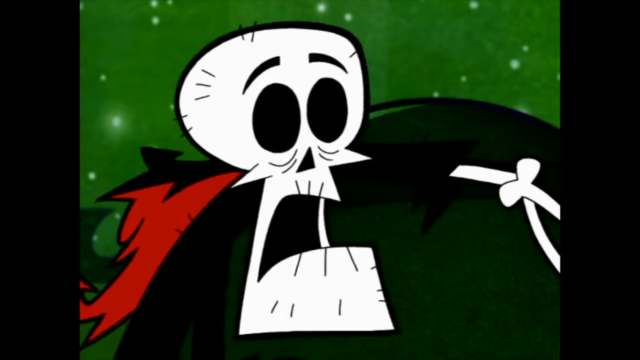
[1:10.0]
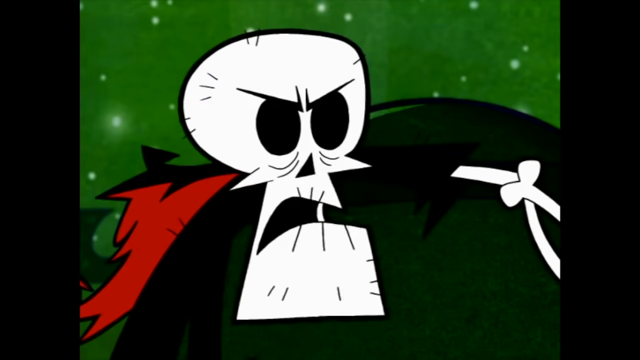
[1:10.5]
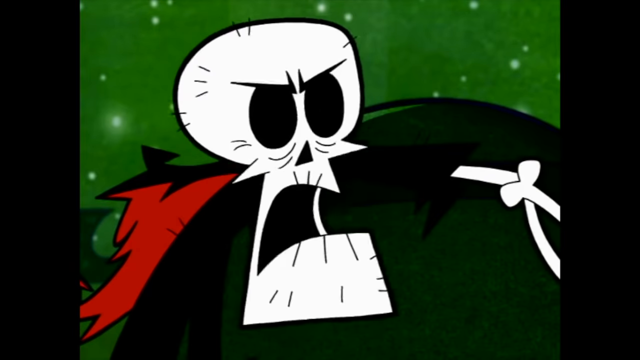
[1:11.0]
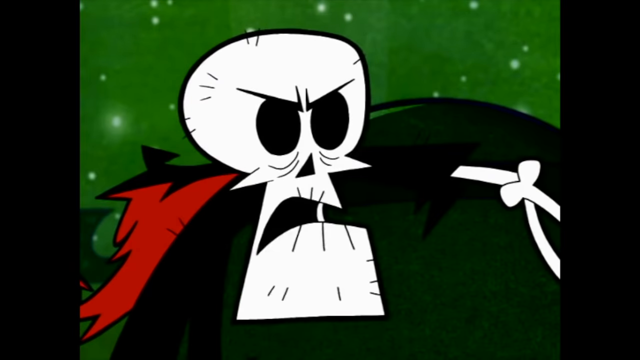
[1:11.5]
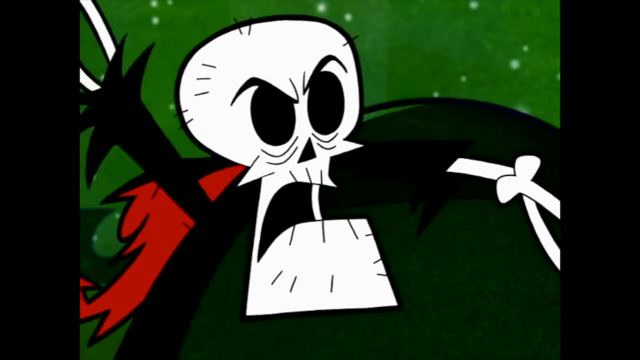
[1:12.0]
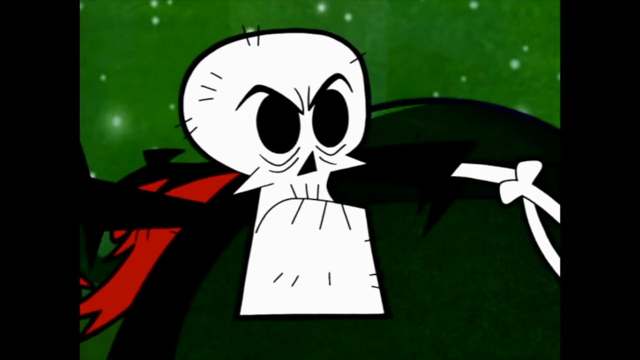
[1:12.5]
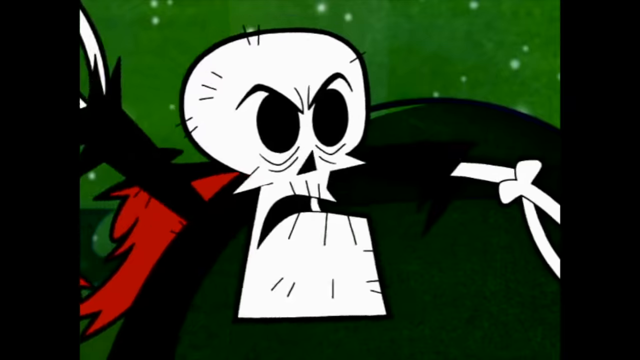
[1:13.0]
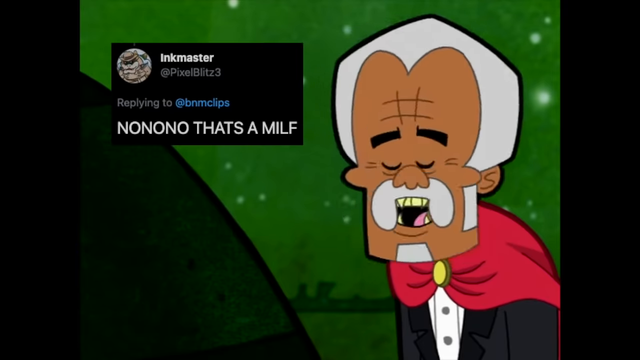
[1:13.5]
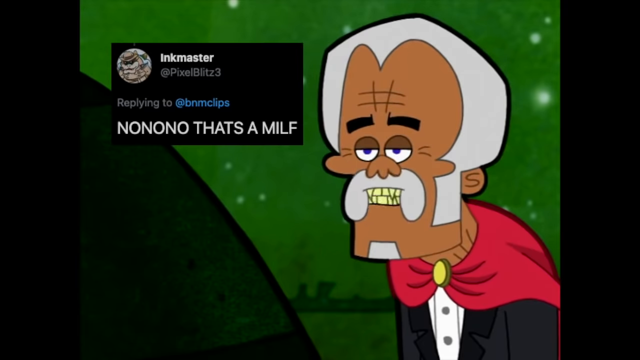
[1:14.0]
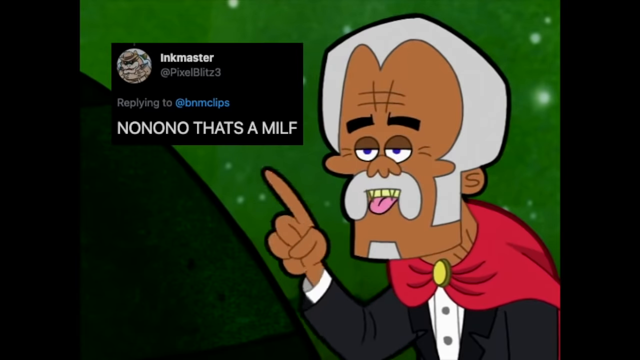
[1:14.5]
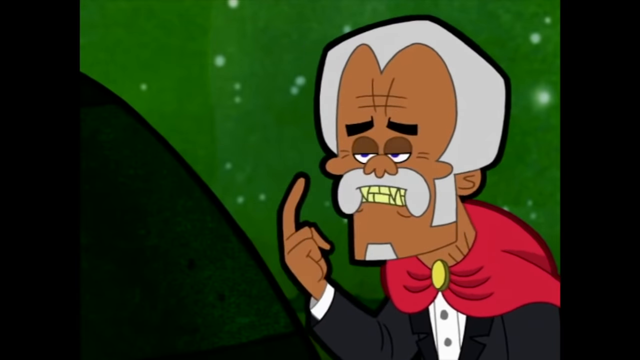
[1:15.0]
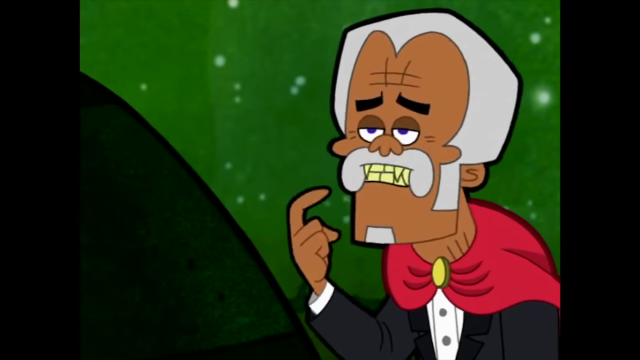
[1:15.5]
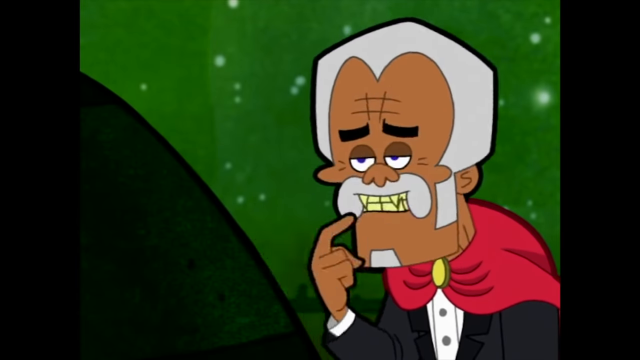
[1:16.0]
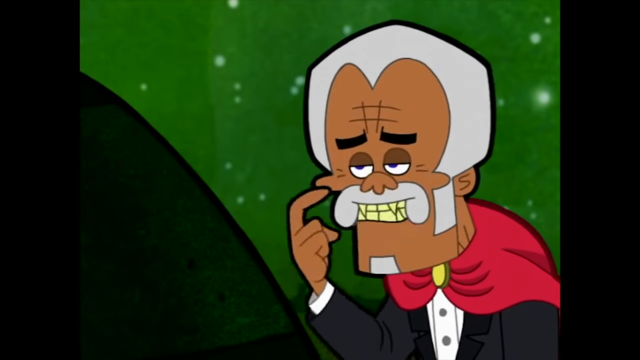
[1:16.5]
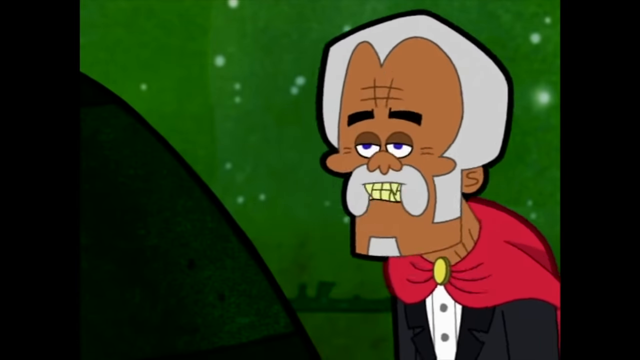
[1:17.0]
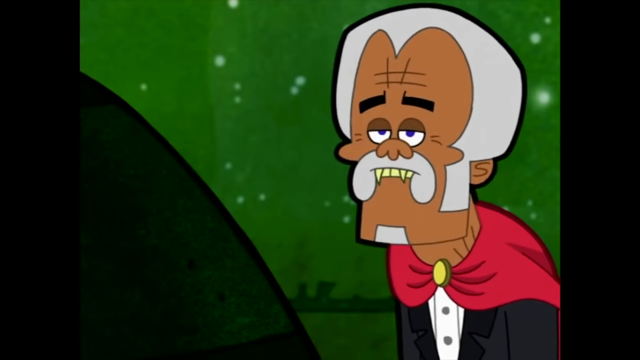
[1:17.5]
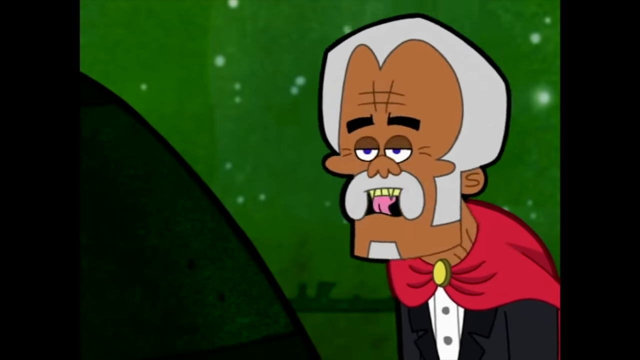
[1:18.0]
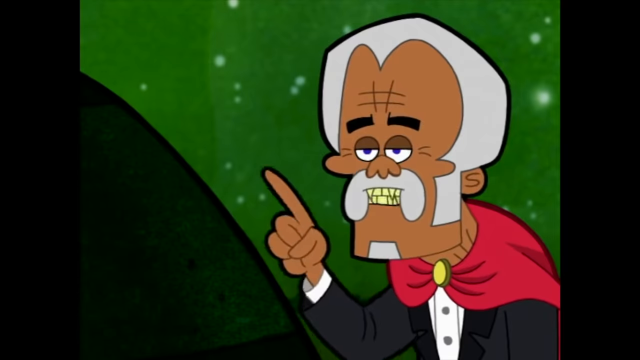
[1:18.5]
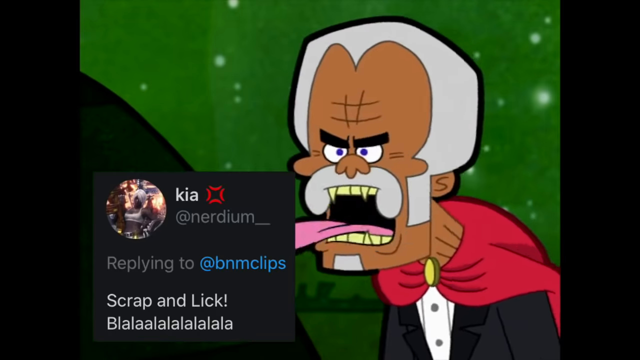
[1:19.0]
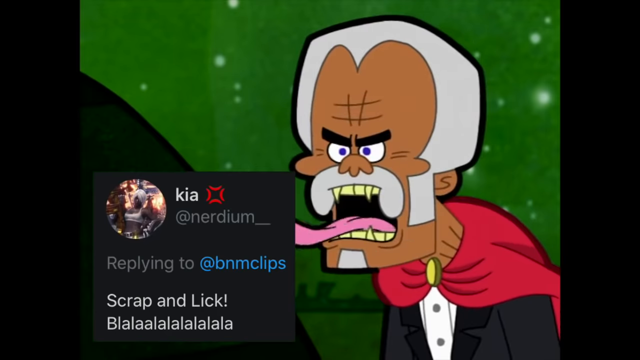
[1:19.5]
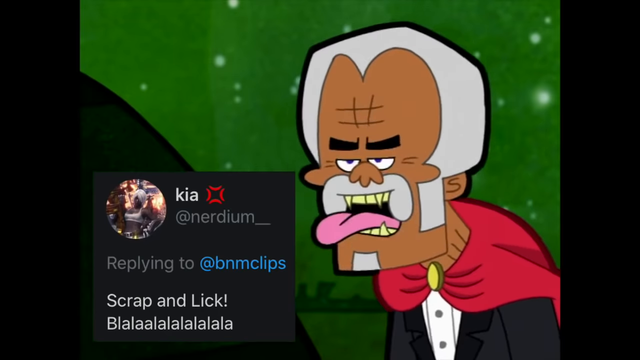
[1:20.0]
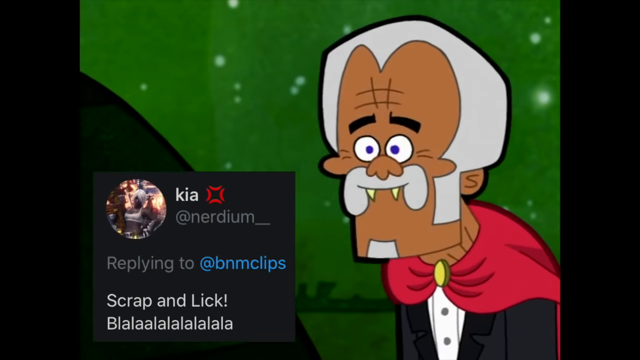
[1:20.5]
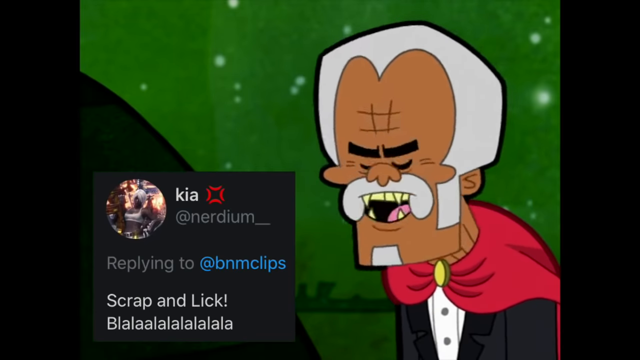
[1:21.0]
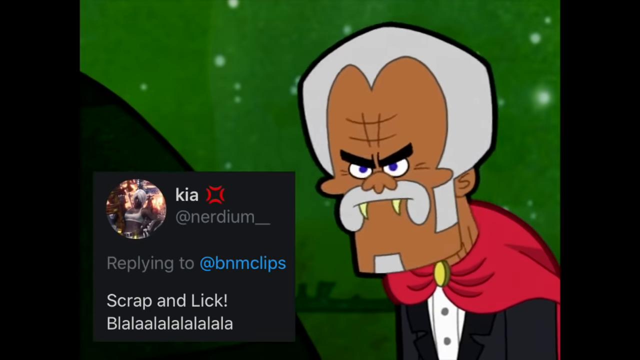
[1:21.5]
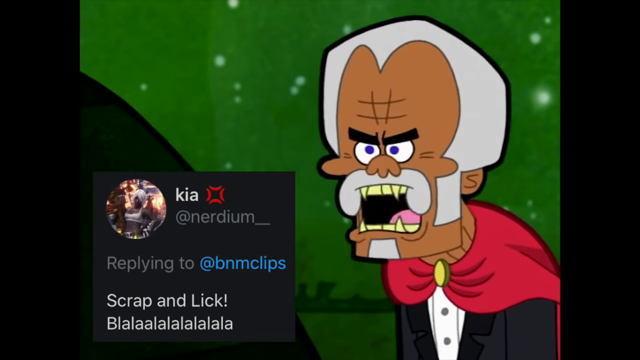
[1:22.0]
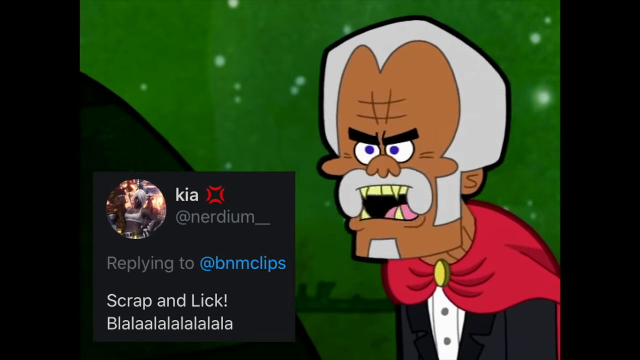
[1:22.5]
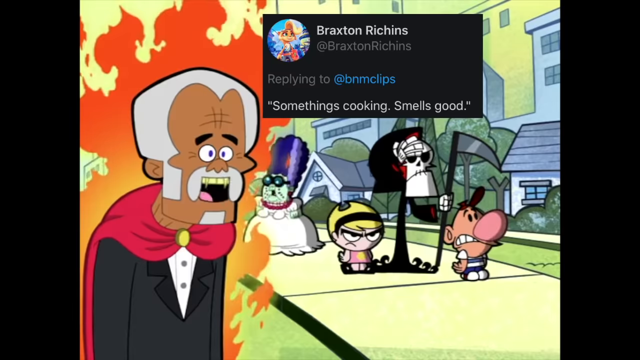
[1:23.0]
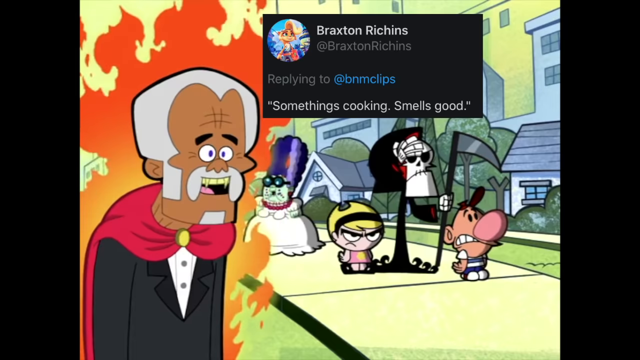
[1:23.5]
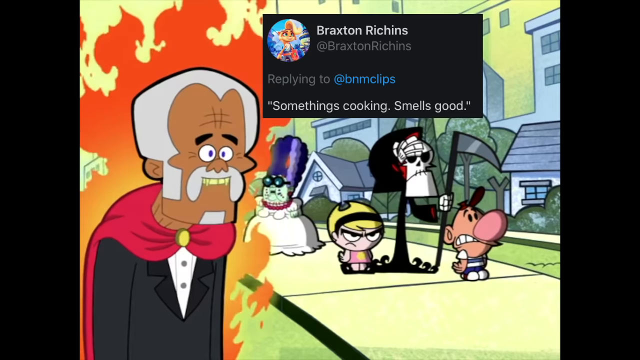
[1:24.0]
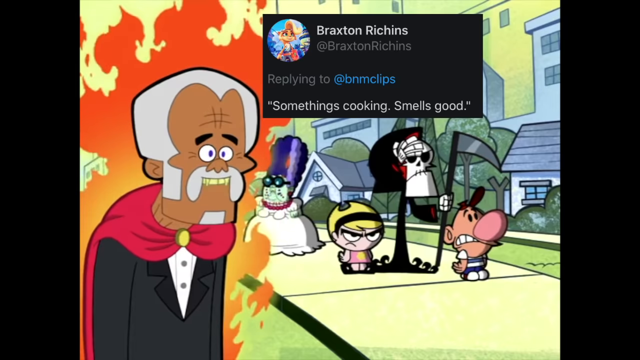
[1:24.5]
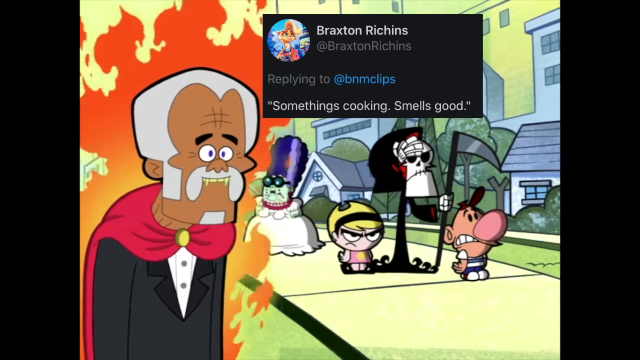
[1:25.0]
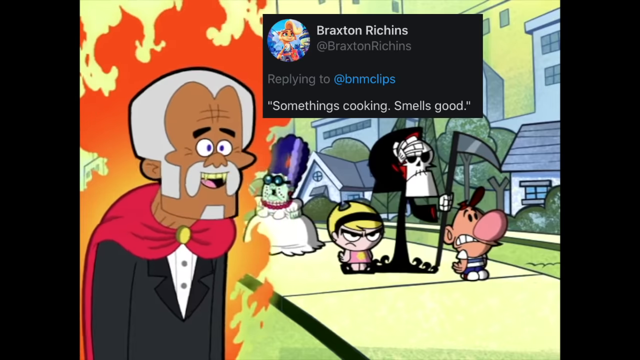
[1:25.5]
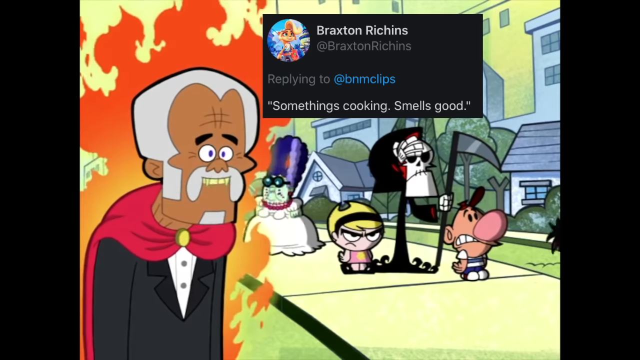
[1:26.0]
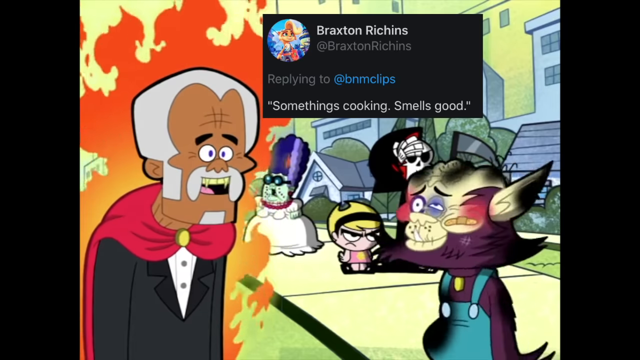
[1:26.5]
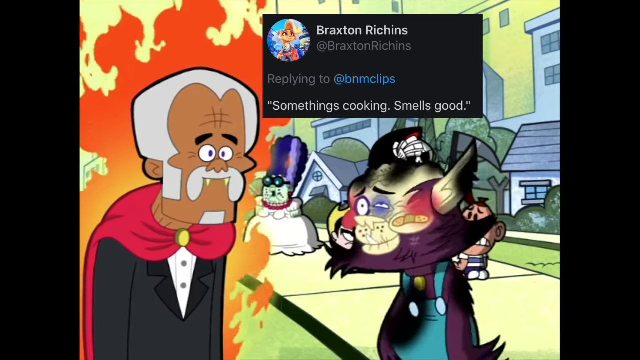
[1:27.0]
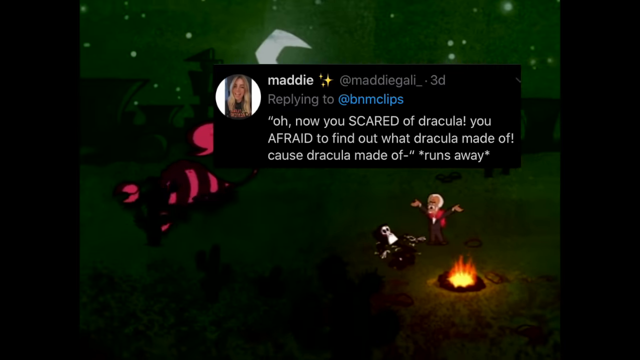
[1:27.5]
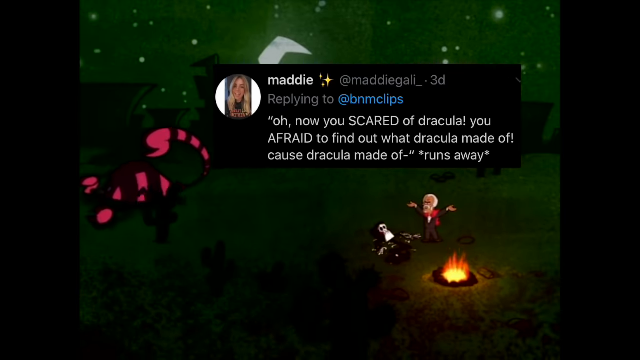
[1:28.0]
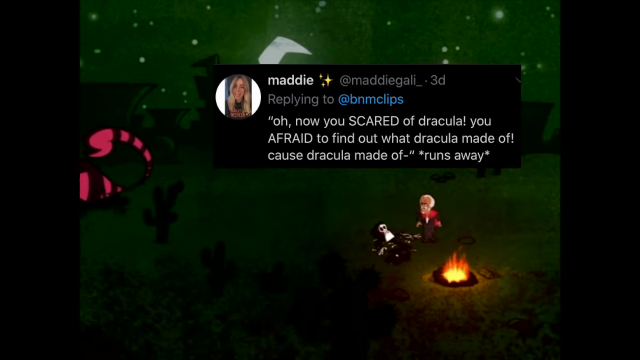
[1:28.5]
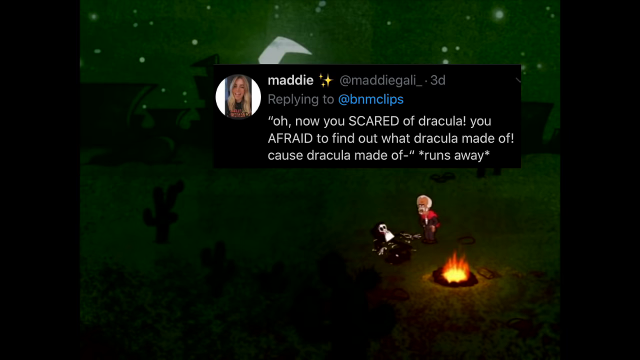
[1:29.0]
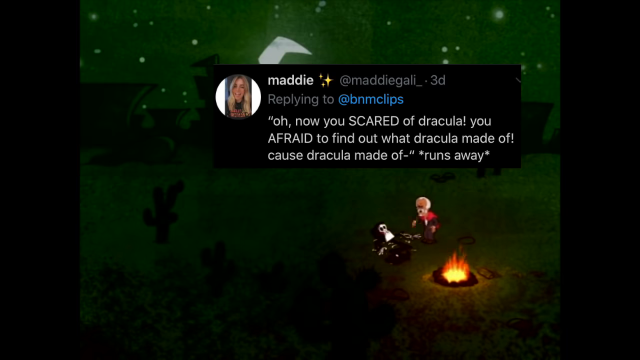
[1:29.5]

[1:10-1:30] A skeleton with a really worried look on his face wears a dark robe, so he kind of looks like he is either wearing a suit or could be the Grim Reaper. A figure in the background is green. The skeleton gets angrier and angrier, and his square jaw gets squarer. He looks at the old Dracula, who looks very old, with white hair and a white mustache. Dracula makes faces and laughs, "ha, ha, ha." Death lies there, looking confused, with big scorpions and dead animals around Dracula. Death gets very angry and sits down at the campfire with Dracula.